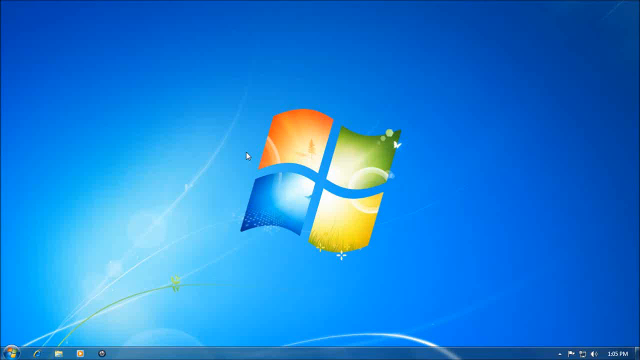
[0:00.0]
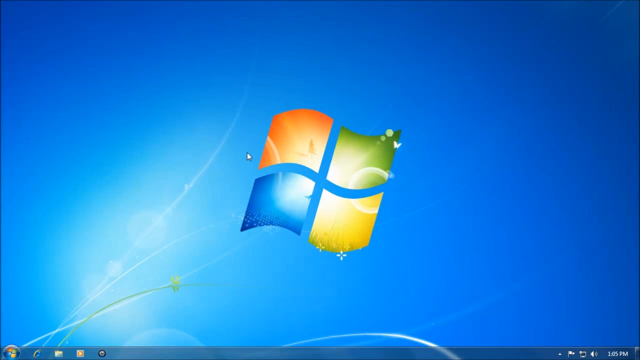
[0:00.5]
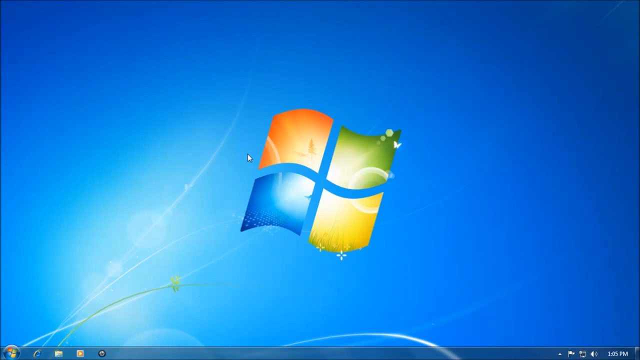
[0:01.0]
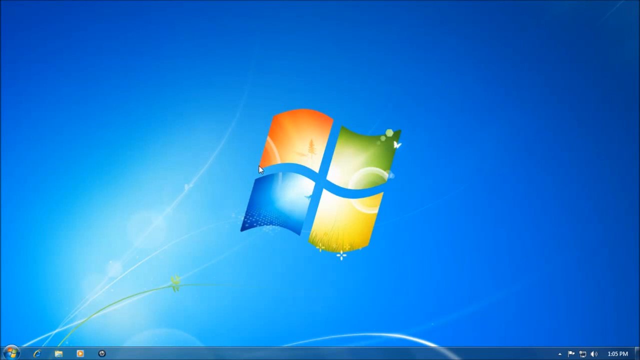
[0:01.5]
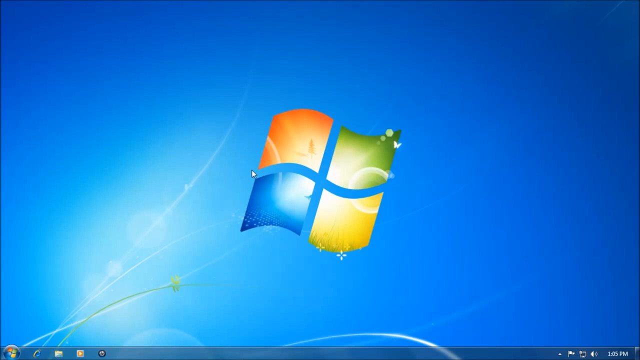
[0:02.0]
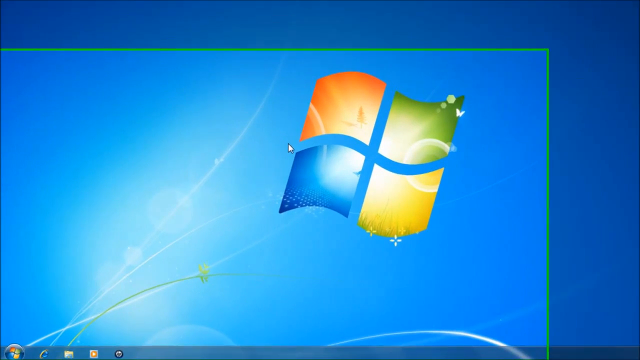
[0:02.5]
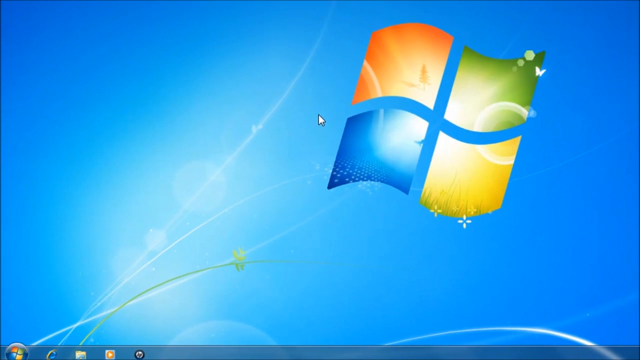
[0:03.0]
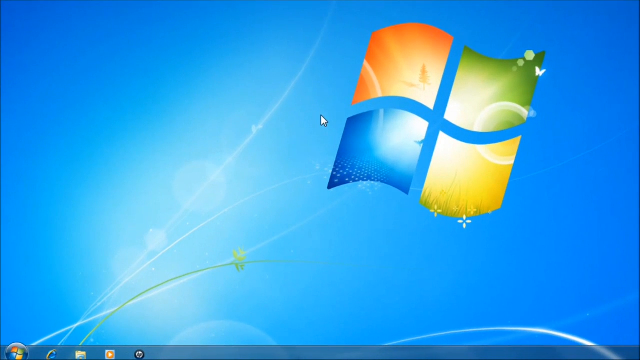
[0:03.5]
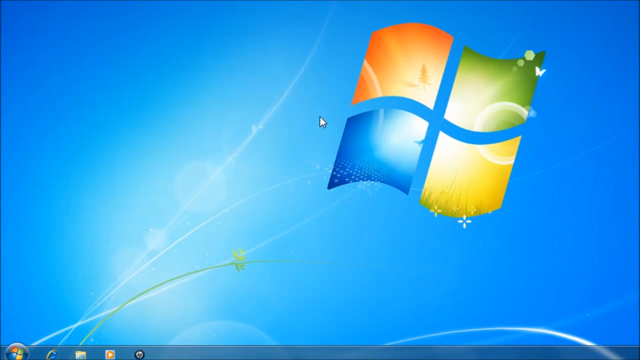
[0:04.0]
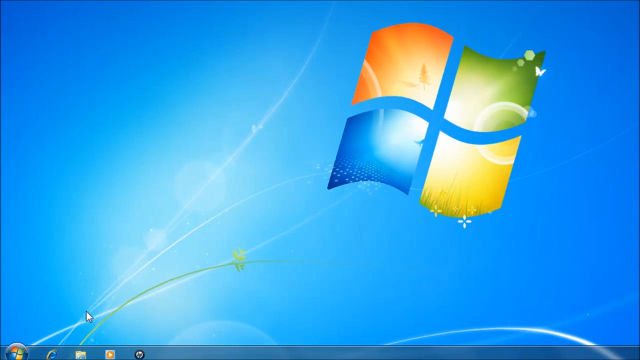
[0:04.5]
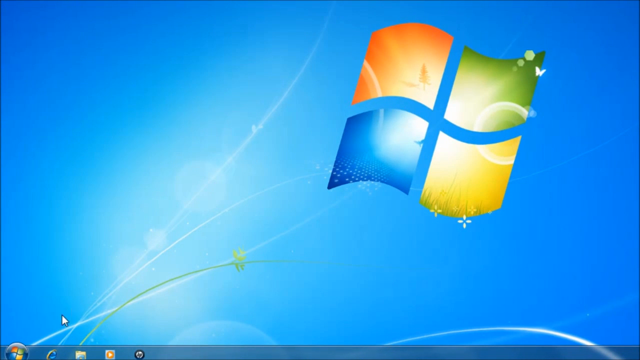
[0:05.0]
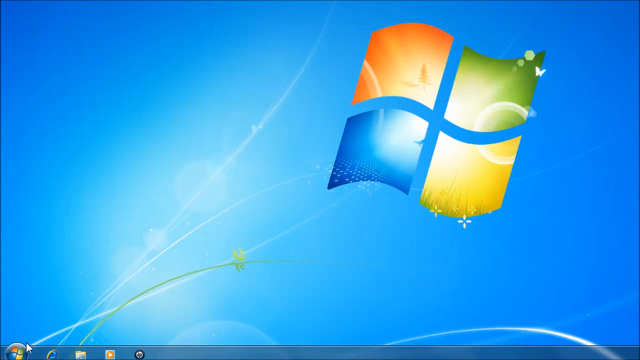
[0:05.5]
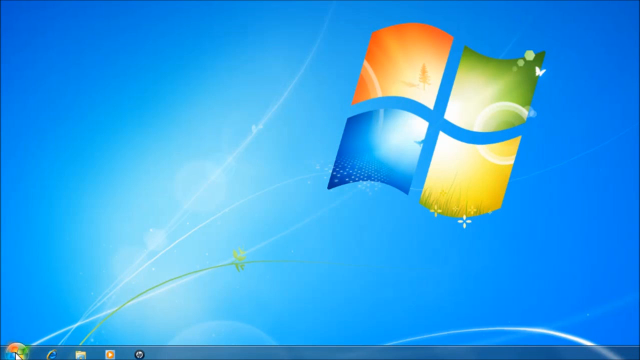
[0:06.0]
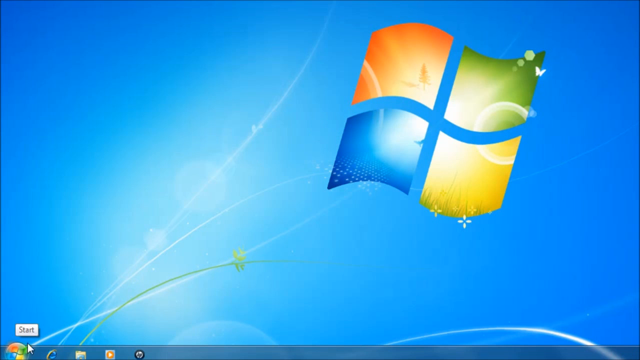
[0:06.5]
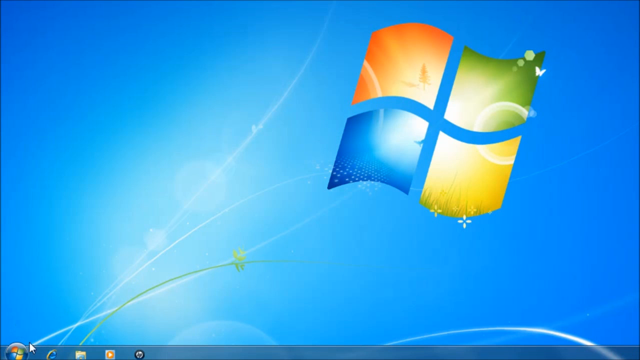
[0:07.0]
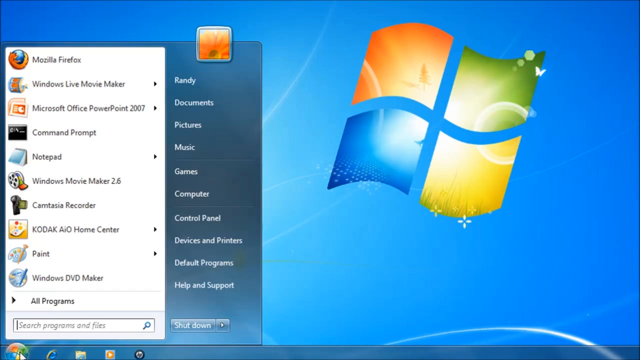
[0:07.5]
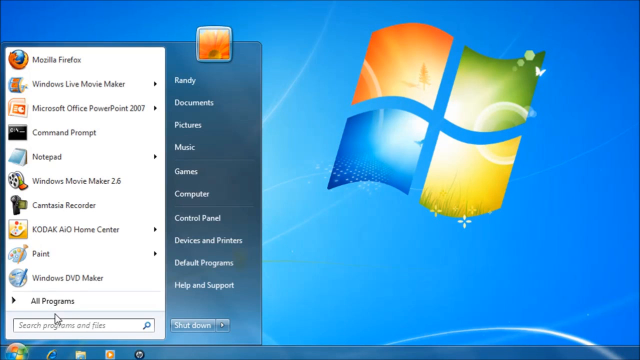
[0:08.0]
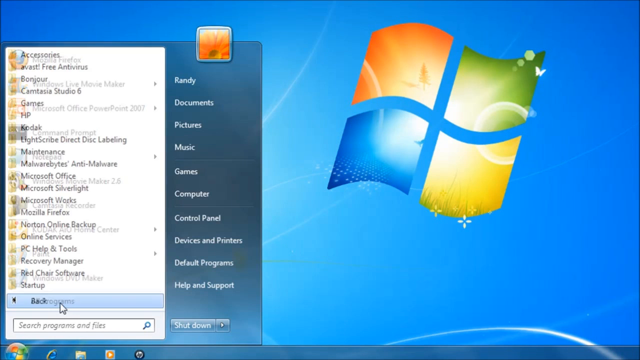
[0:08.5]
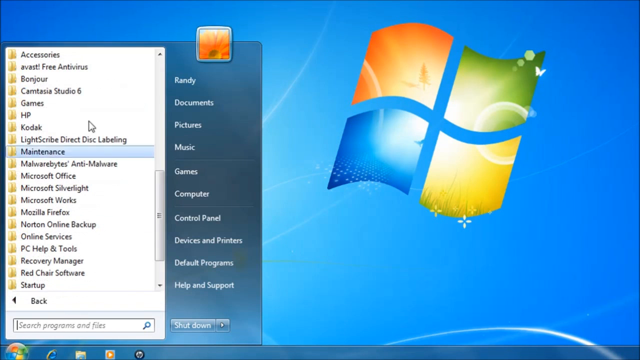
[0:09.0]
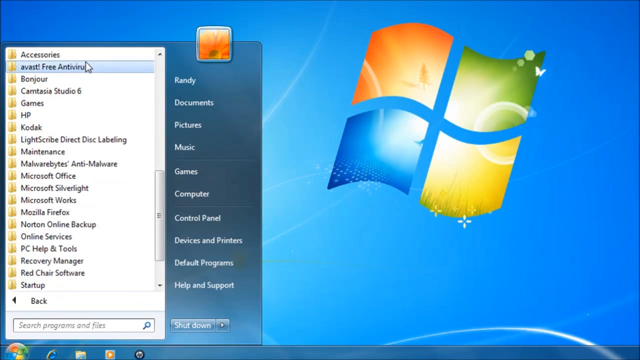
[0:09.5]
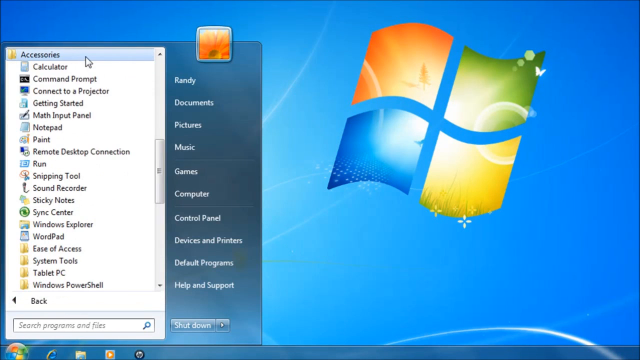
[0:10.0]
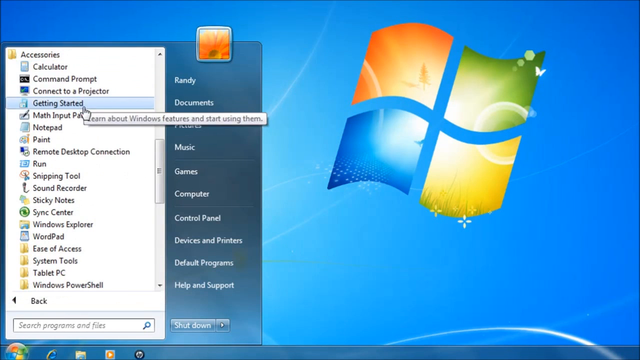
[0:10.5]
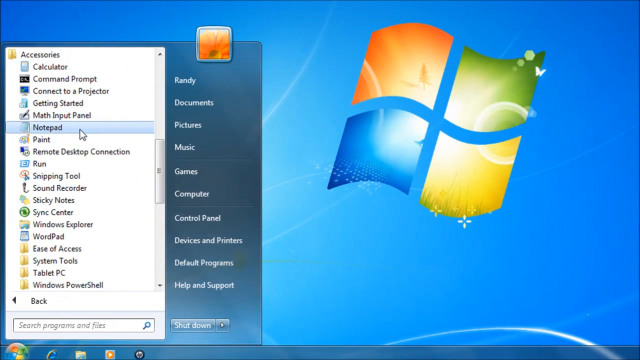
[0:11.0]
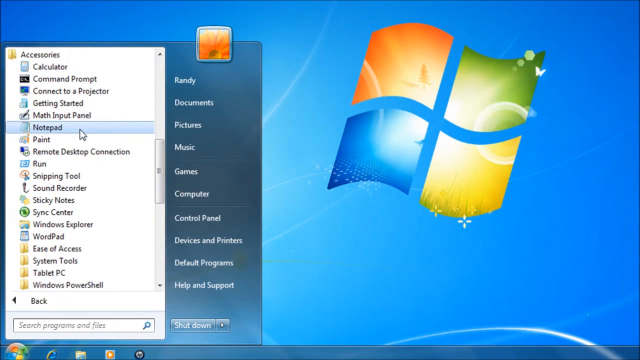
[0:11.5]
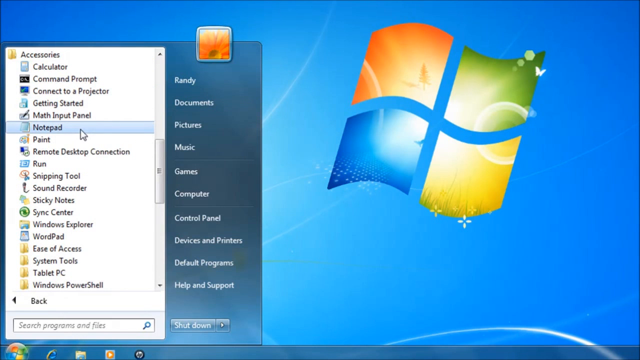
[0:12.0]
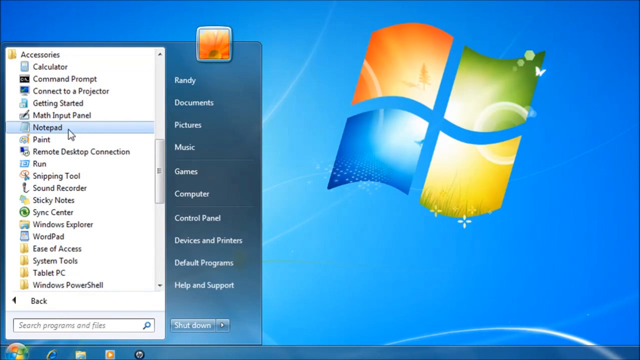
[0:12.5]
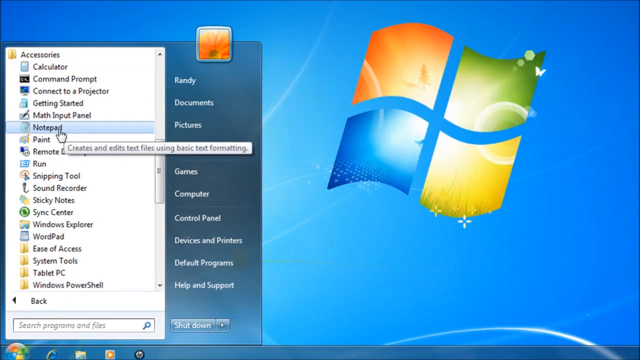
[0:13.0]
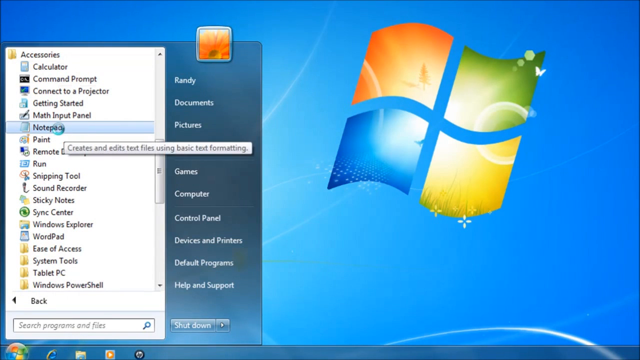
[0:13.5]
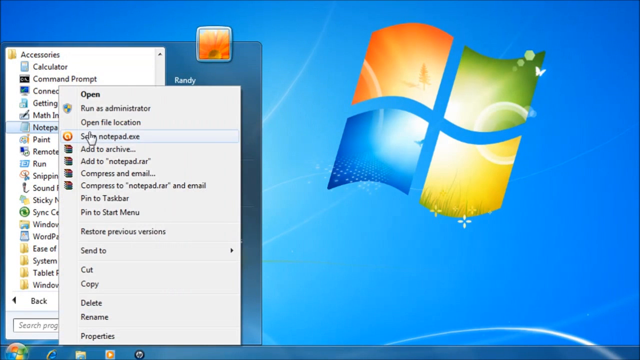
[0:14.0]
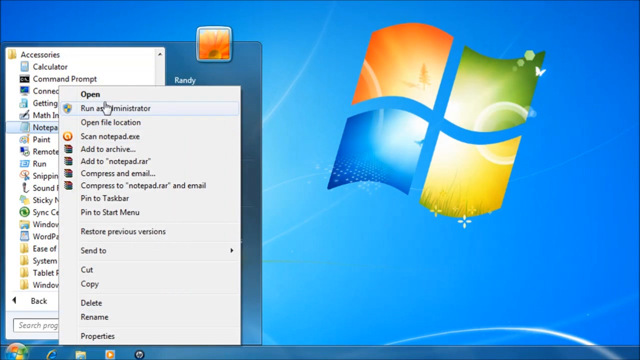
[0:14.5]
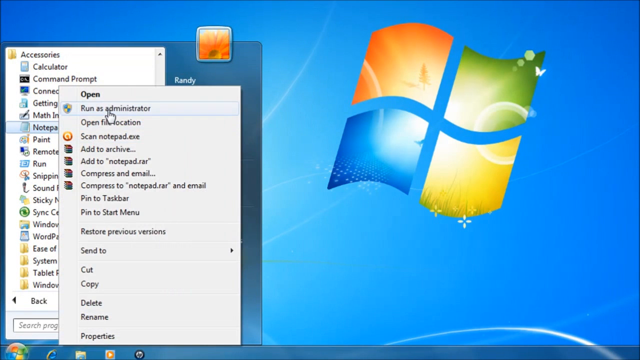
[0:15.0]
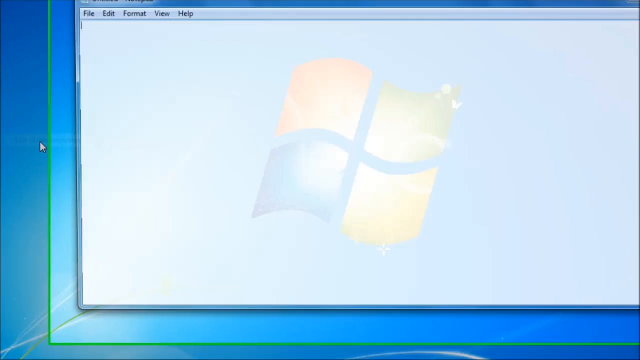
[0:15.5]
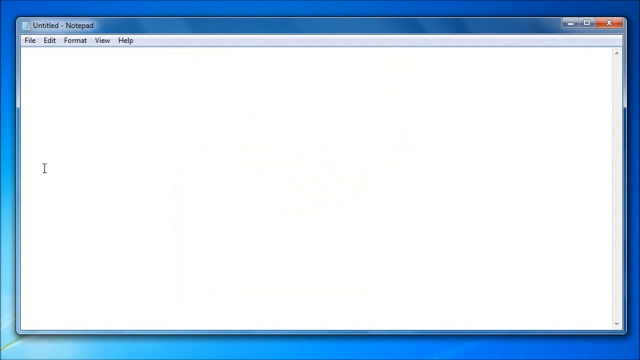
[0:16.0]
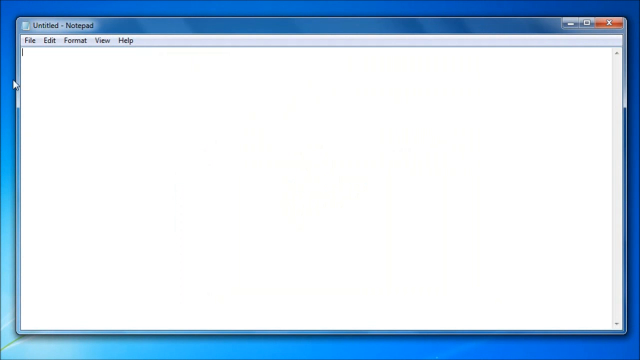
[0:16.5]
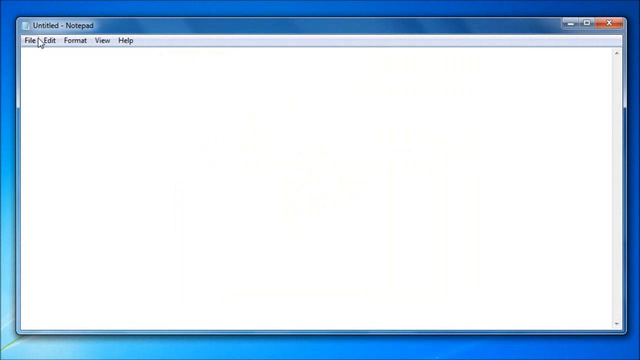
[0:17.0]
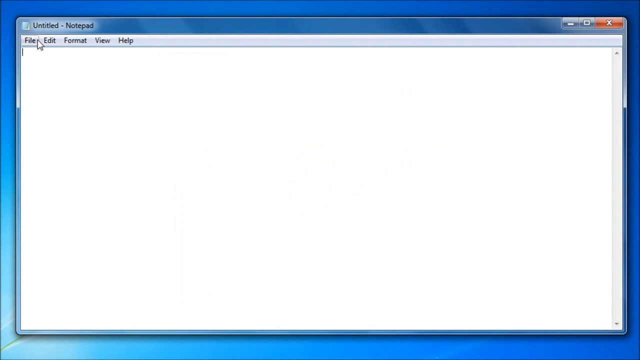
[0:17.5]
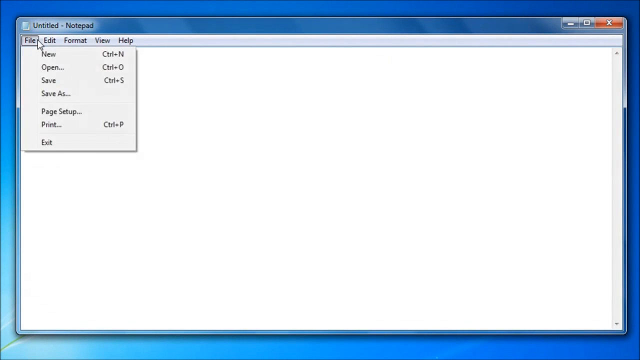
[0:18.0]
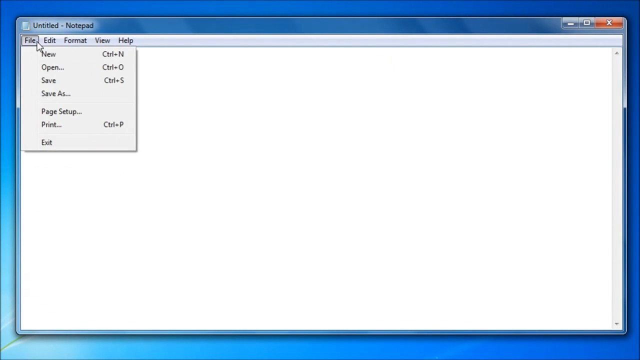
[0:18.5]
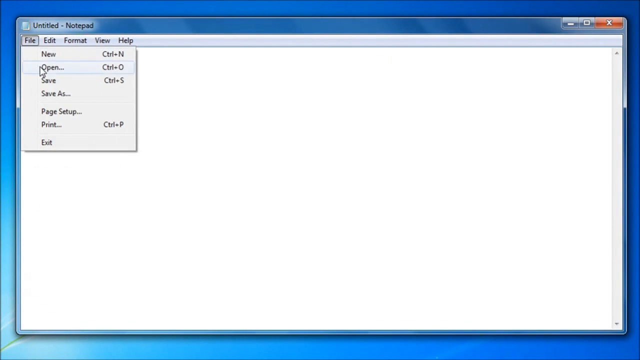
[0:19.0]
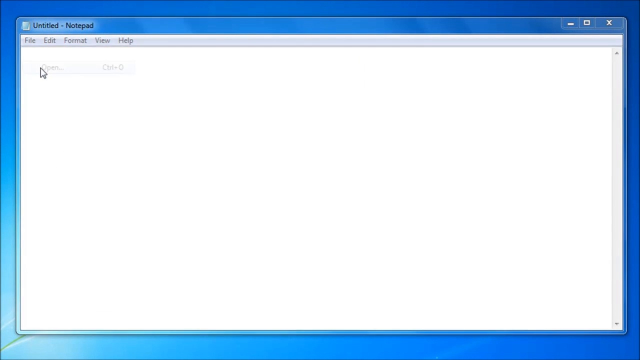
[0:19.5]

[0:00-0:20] The Start button in the lower left corner is pressed, then All Programs, then Accessories, then Notepad, which is run as an administrator. An untitled Notepad file opens, with File, Edit, Format, View and Help menus and controls to close, minimize or maximize the window. The File menu is then opened. The PC's home screen is dark blue like a sky, with bright sprinkled fibers across it.